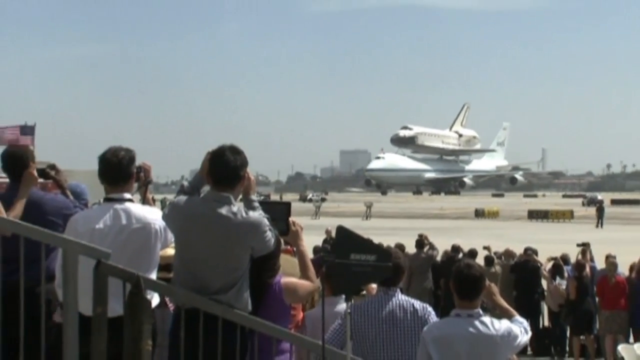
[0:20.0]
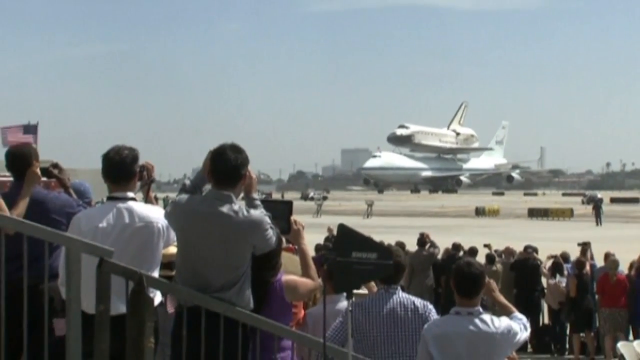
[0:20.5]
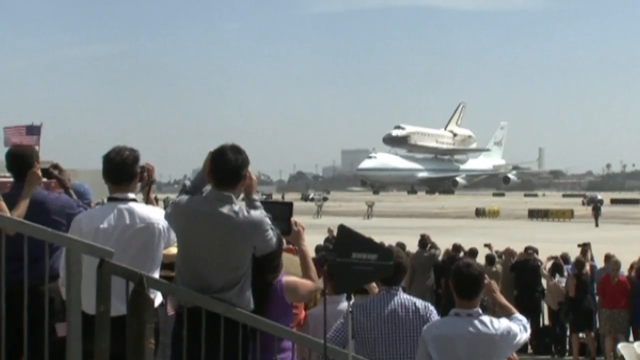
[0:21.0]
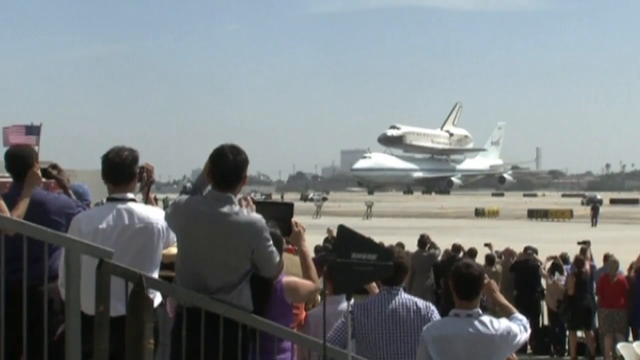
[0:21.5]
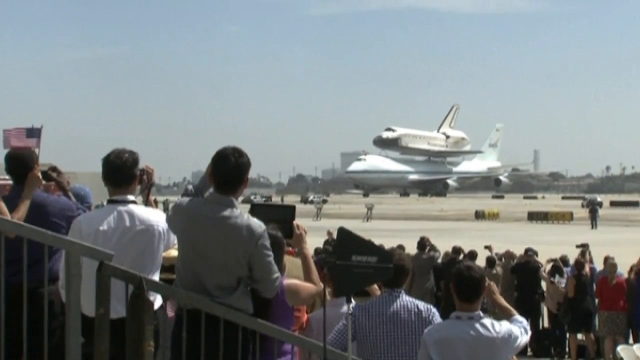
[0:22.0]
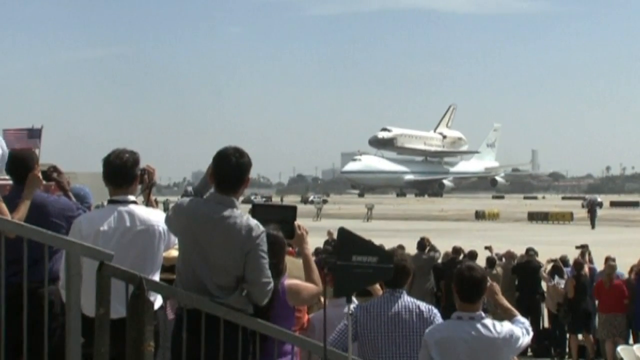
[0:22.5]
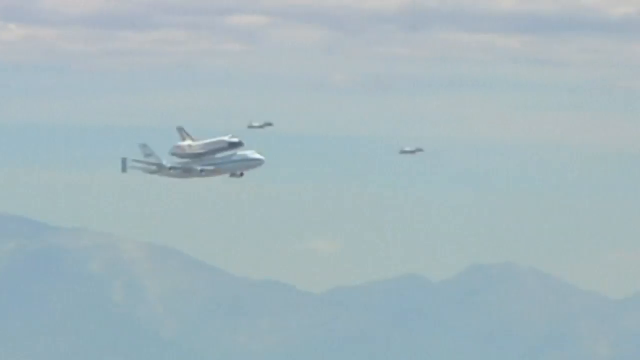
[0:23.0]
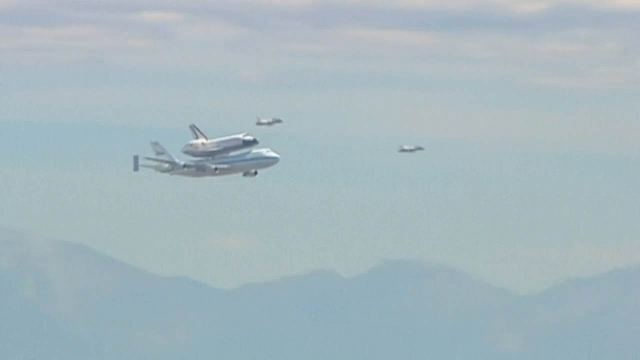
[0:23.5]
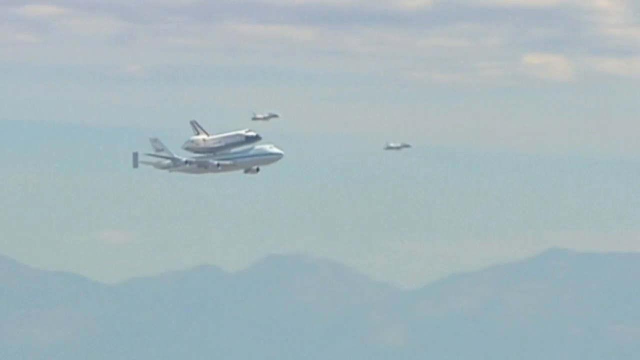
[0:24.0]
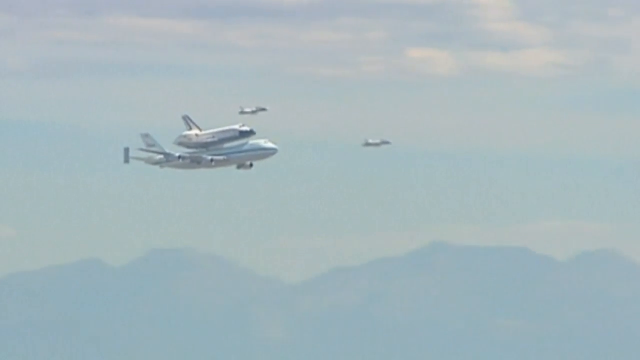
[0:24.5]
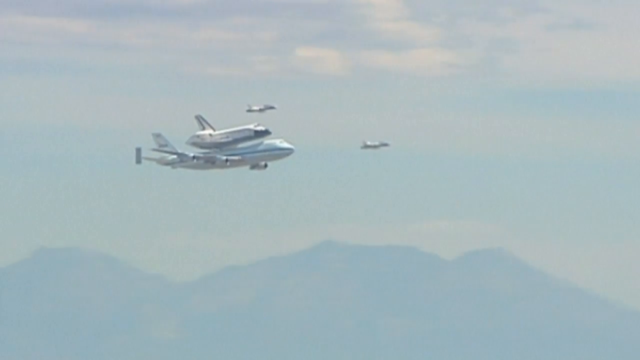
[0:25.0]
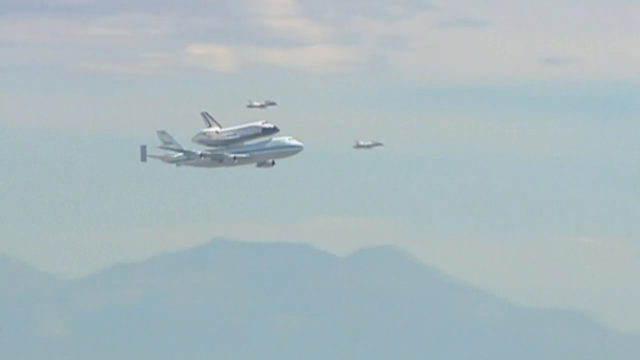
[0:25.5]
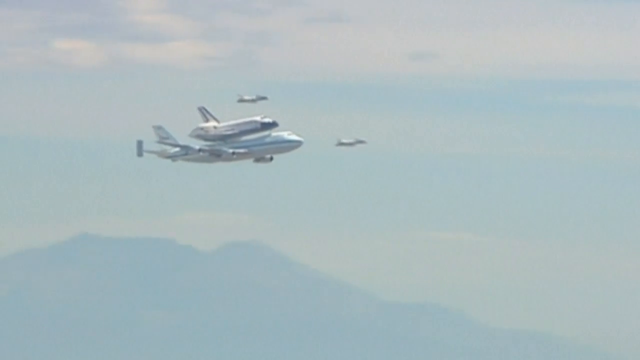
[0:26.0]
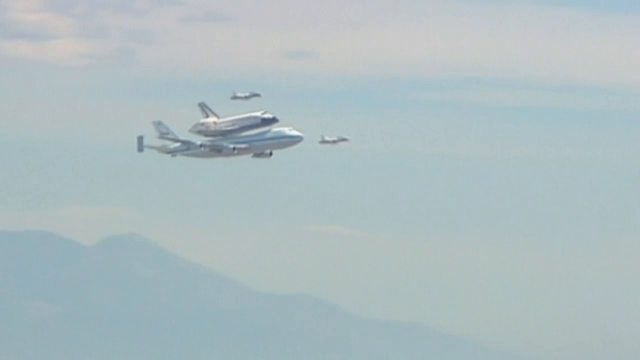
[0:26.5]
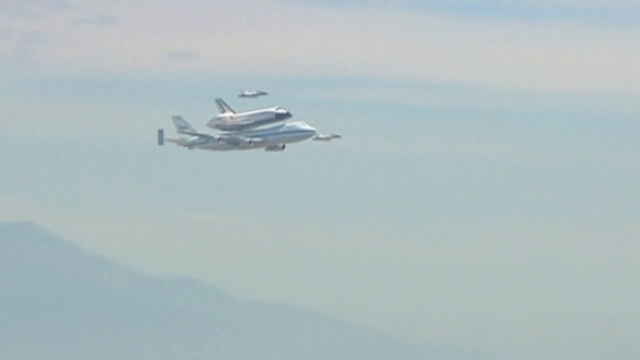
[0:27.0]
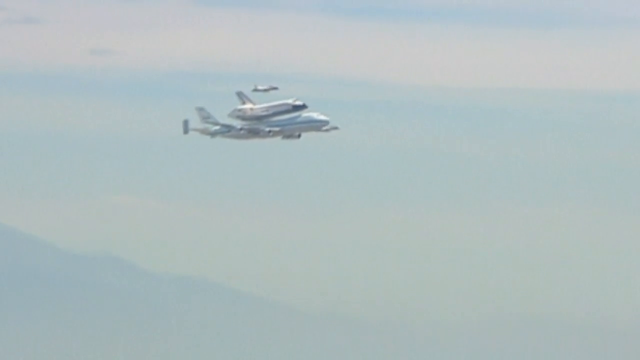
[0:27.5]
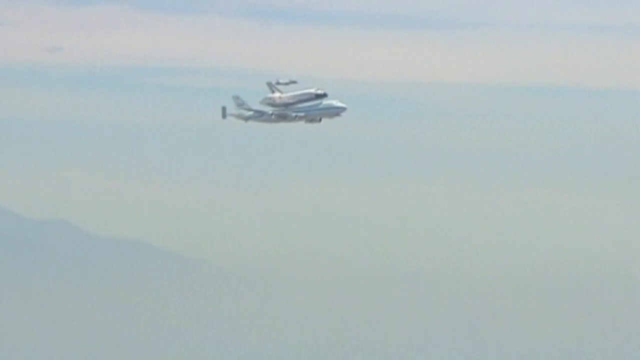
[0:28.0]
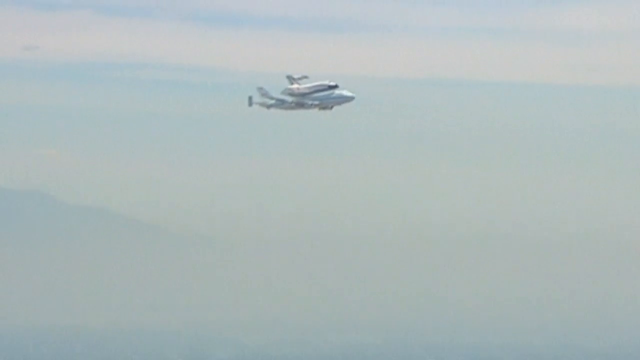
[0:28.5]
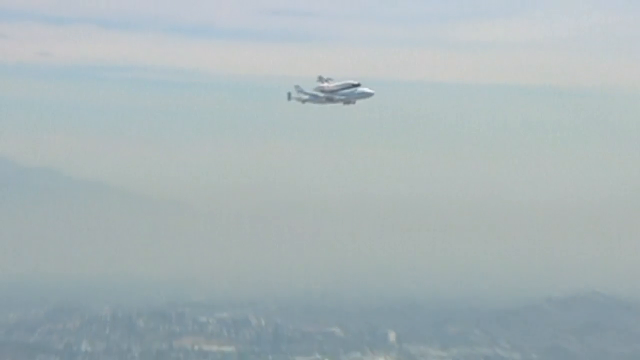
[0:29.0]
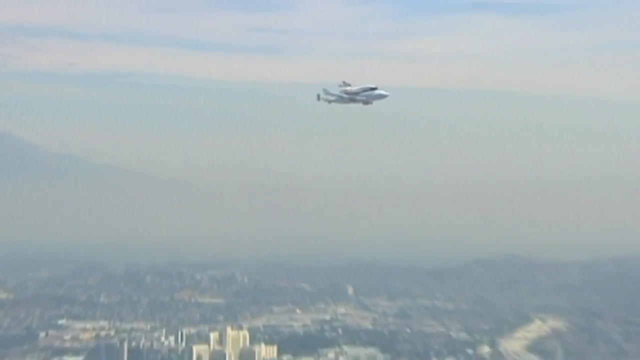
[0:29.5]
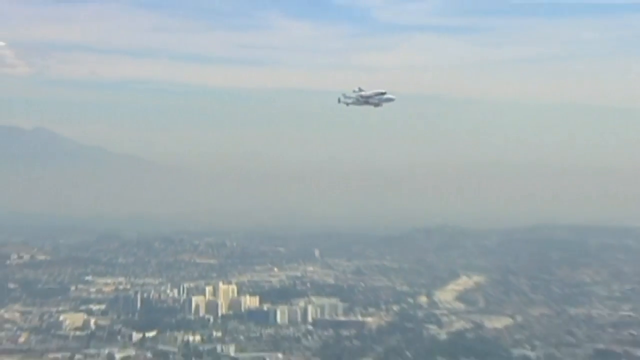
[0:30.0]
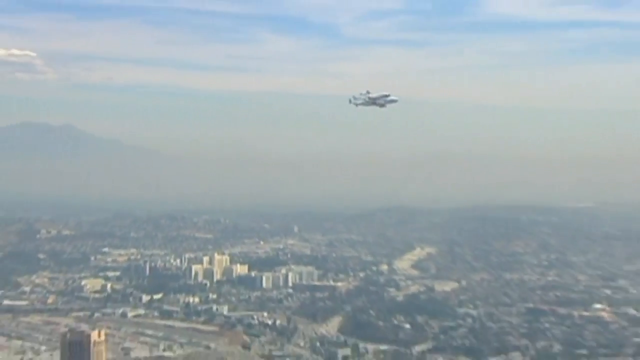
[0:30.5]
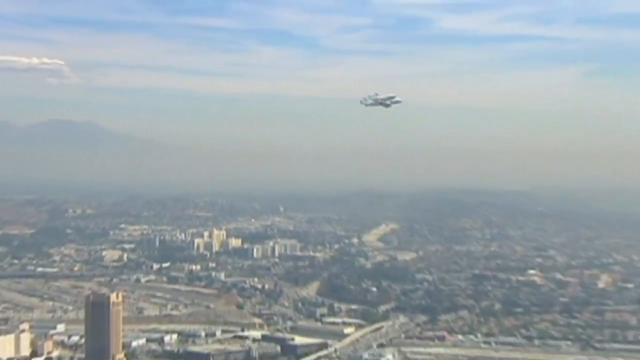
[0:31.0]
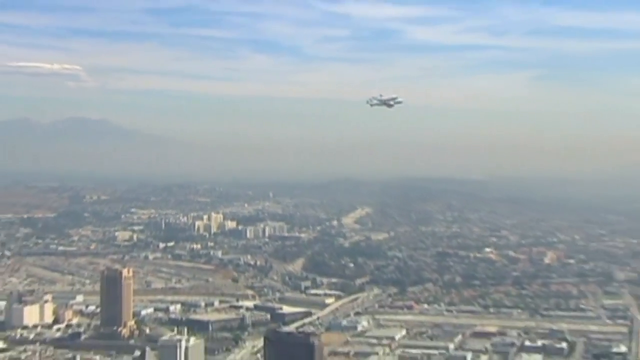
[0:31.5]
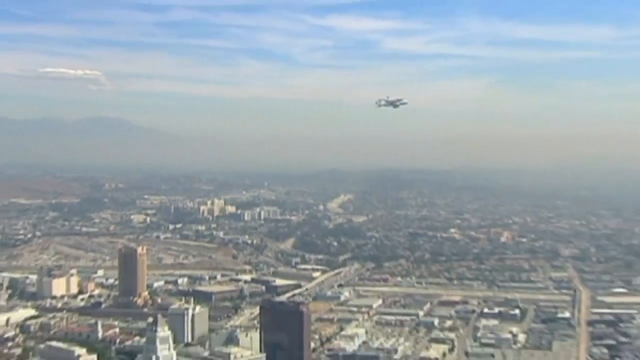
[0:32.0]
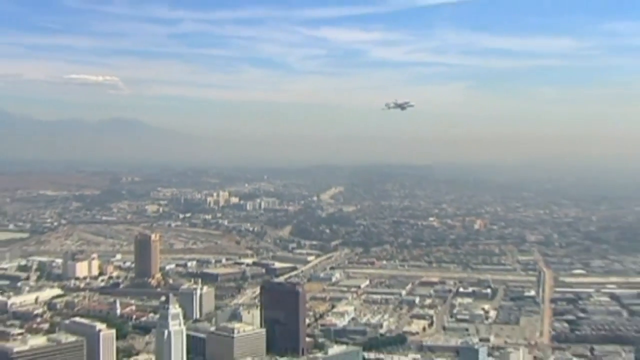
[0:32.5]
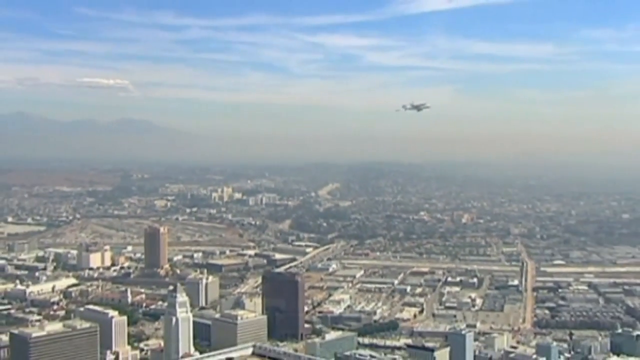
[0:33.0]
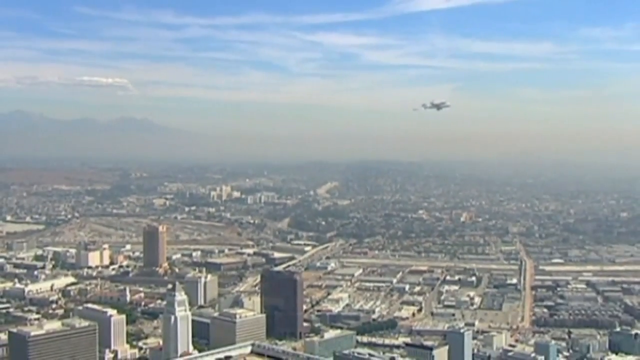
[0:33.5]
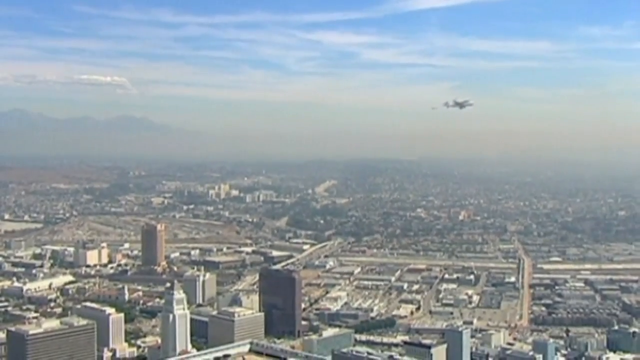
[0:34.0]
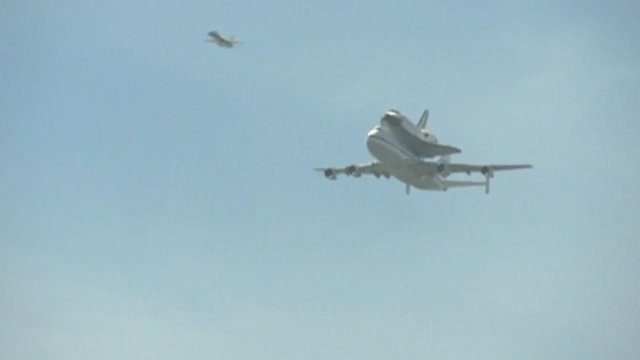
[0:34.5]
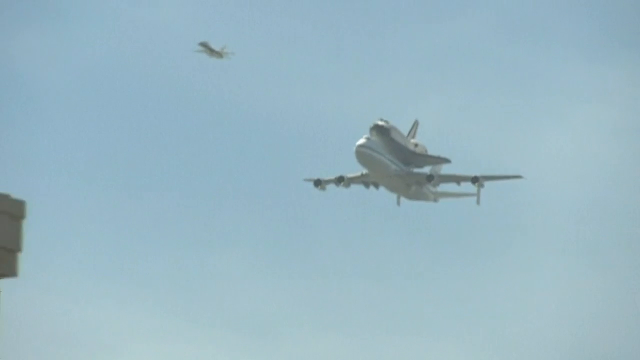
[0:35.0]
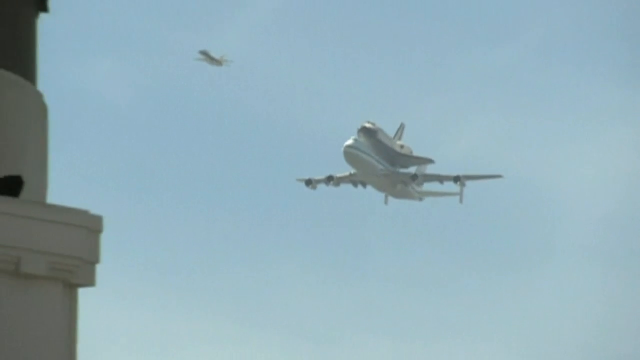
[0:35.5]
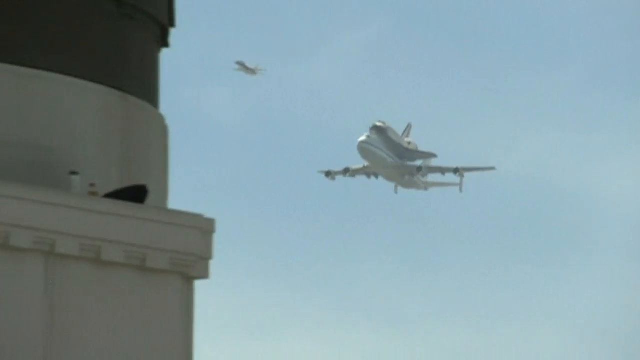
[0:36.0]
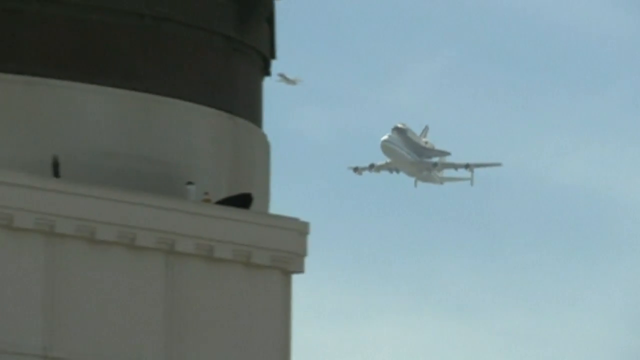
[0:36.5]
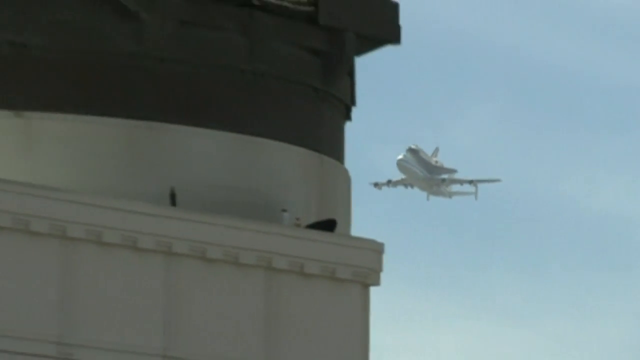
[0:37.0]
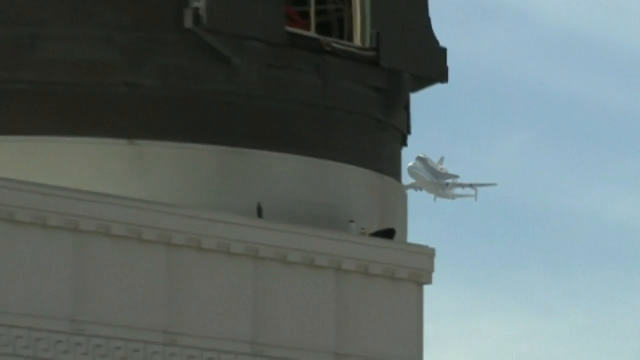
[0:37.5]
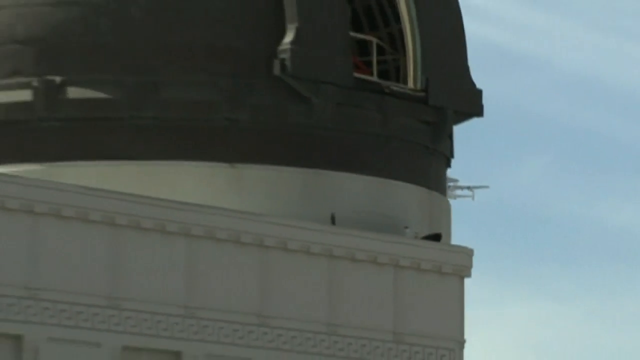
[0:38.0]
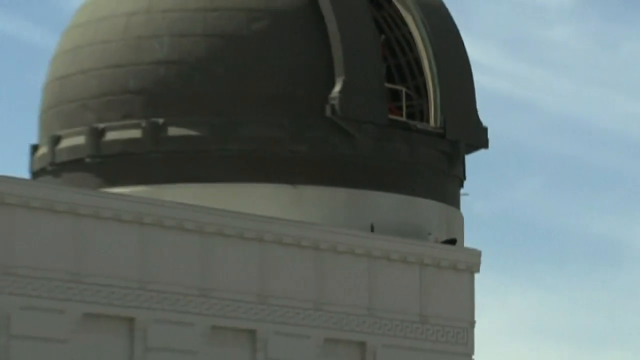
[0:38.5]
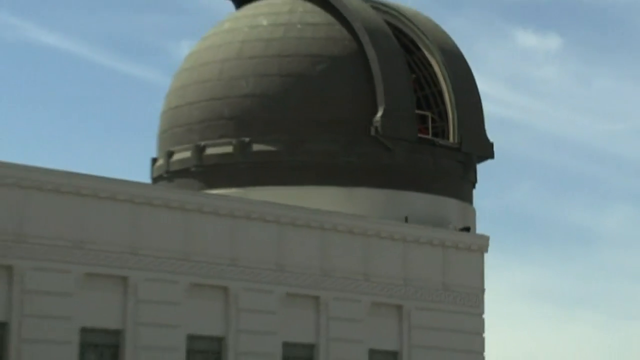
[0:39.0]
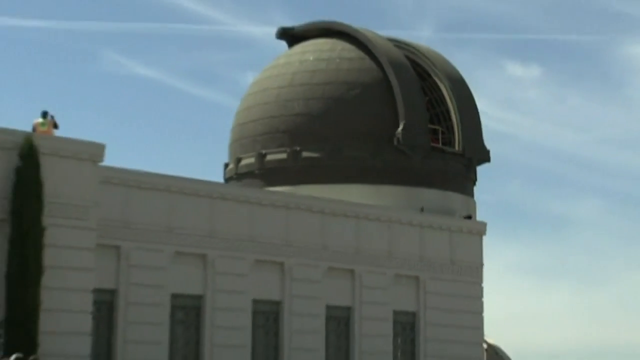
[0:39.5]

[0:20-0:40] The view looks past a rail, with the rail on the other side of a group of standing men, all holding some kind of device and apparently capturing video or taking pictures. It is stadium seating, as the people look shorter toward the right. Apparently only one man is standing out on the runway, not close to the space shuttle but to the right of the black and yellow sign. It looks smoggy or hazy. A building rises to the left of the airplane, with a shorter one to the left of that, and what are possibly electrical poles stick up as vertical lines. Past the stands on the left, the United States flag in the distance blows to the left in the wind. Then the airplane is seen in the air with the space shuttle still attached, with a couple of what seem to be smaller space shuttles or aircraft on the other side. The camera pans to follow it; it is foggy or hazy, with low-lying clouds above and a valley below. Zooming out, a city appears below with a network of roads, a few tall white buildings, and one really tall building closest to the camera among others. Zooming out more, there is a really large rectangular black building and a pillar with a point. A zoomed-in shot looks up from below, with another airplane above it, catty-corner to the left. The aircraft flies right past what looks like a planetarium with a round dome and an opening, possibly where a telescope is. Somebody is standing on top of the roof looking at it.